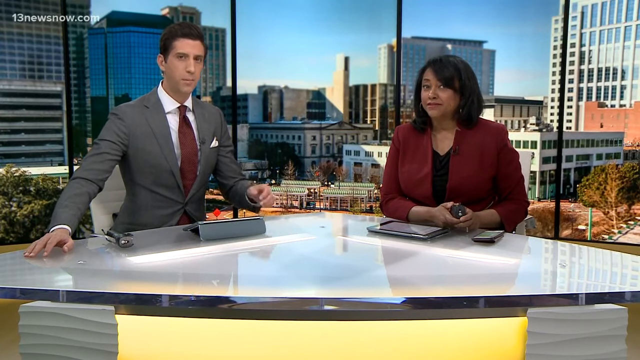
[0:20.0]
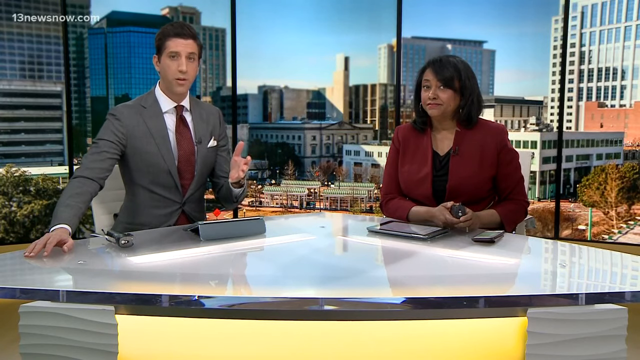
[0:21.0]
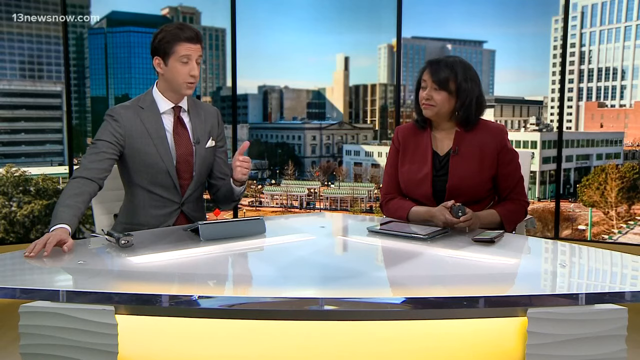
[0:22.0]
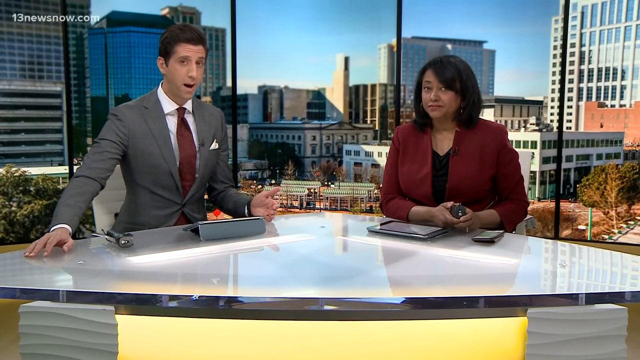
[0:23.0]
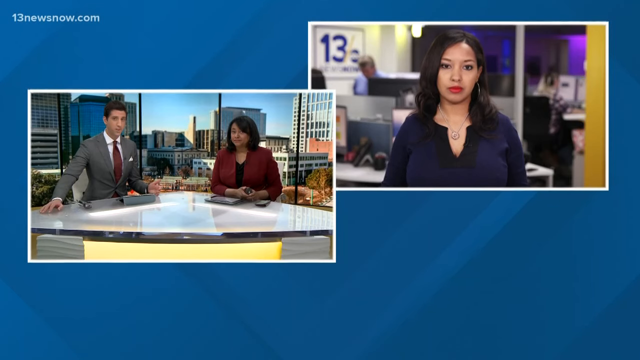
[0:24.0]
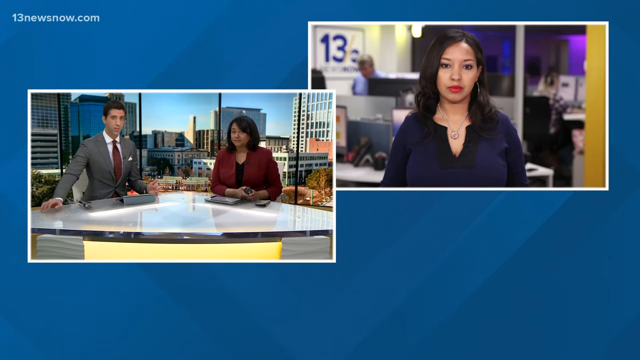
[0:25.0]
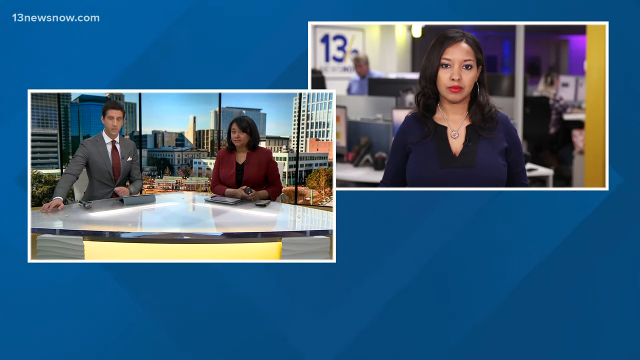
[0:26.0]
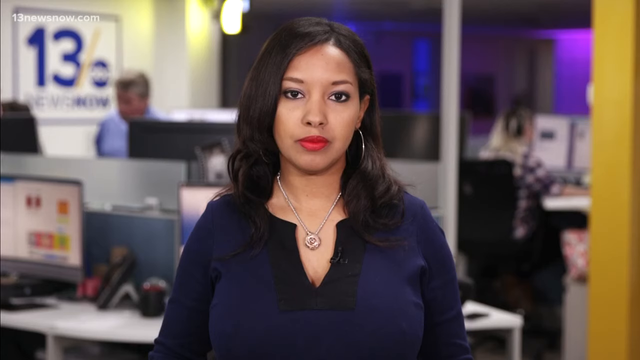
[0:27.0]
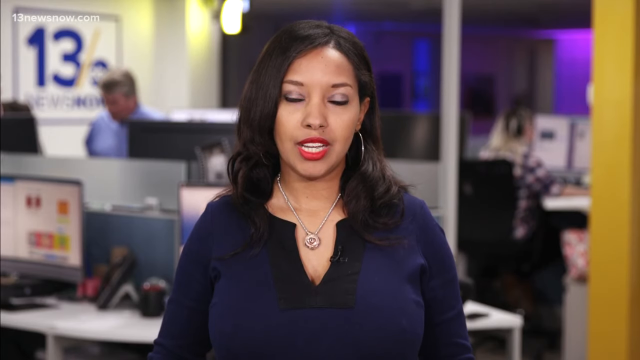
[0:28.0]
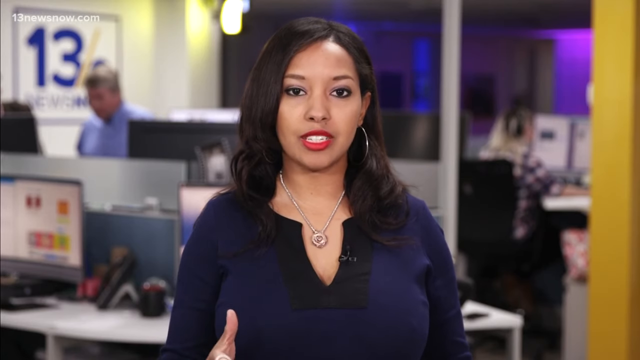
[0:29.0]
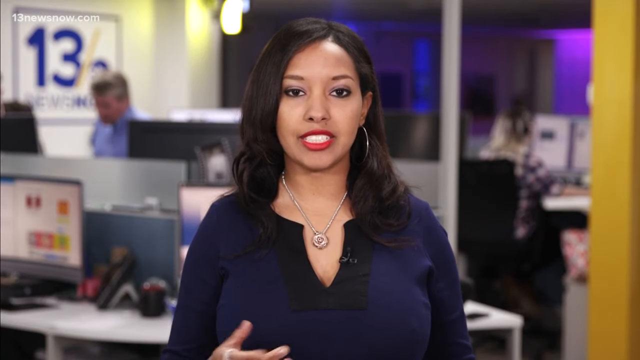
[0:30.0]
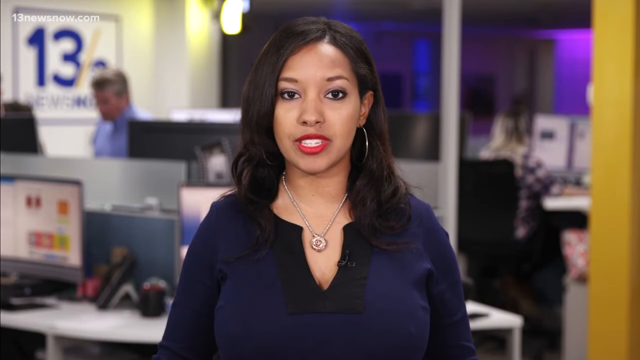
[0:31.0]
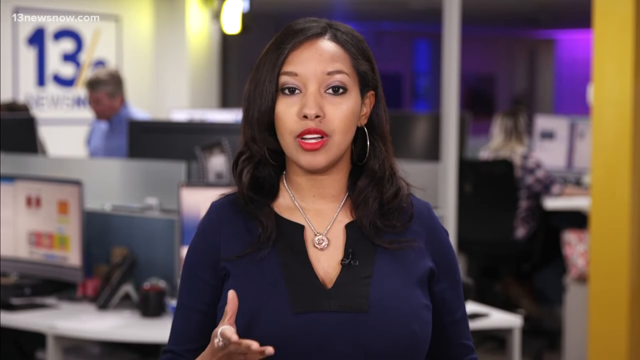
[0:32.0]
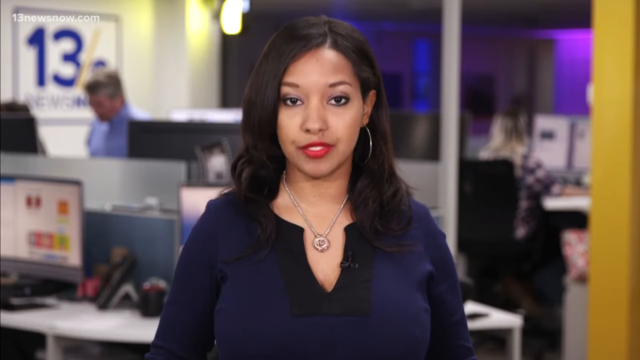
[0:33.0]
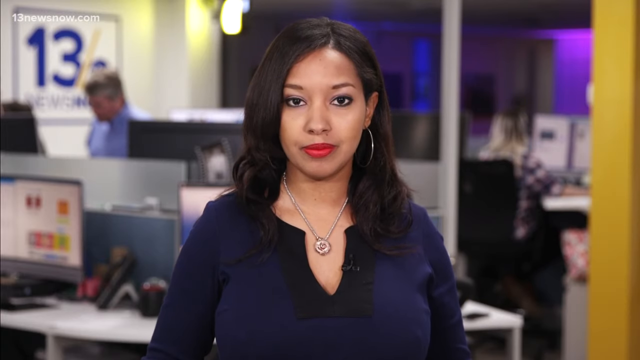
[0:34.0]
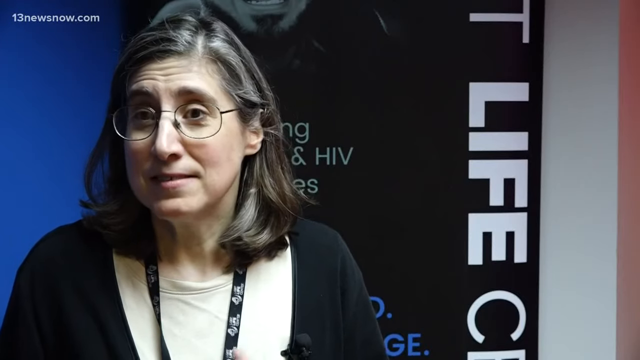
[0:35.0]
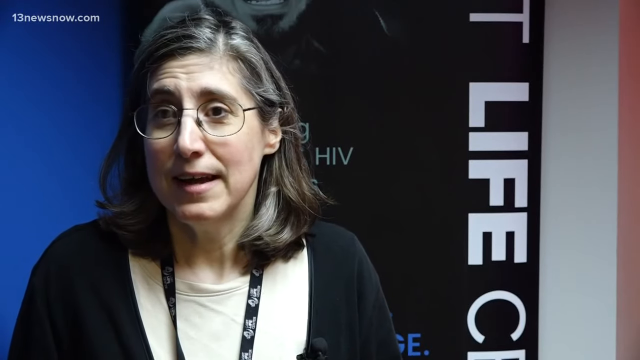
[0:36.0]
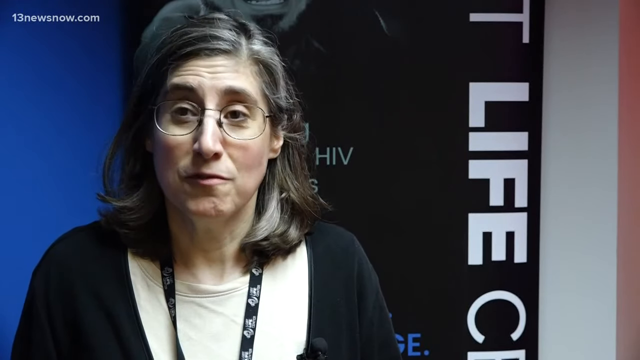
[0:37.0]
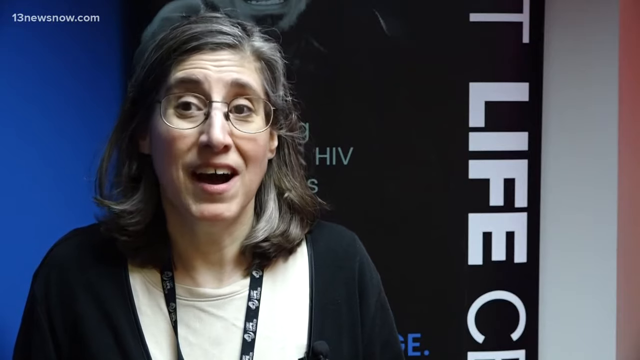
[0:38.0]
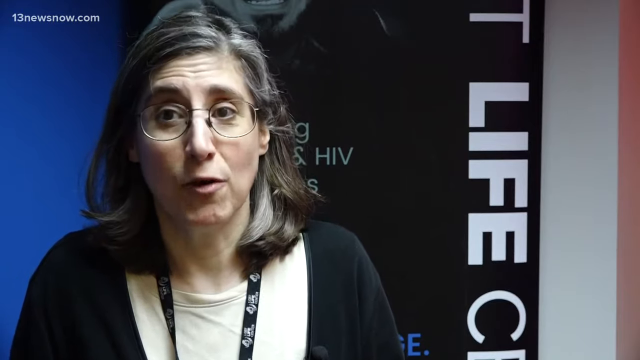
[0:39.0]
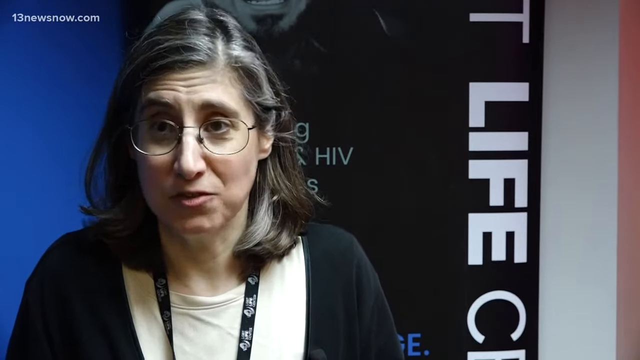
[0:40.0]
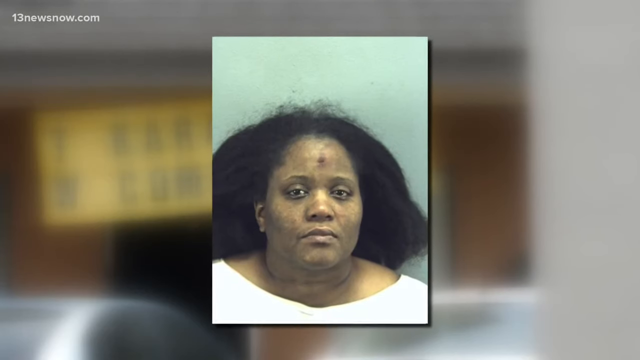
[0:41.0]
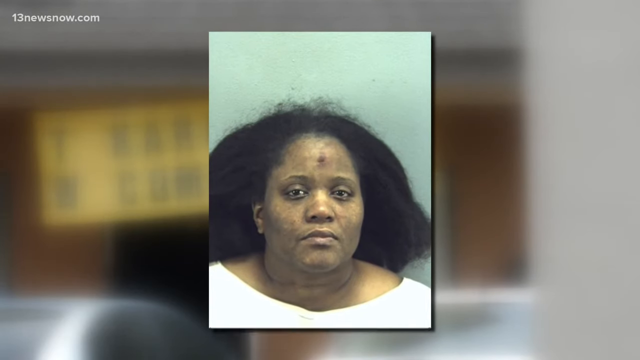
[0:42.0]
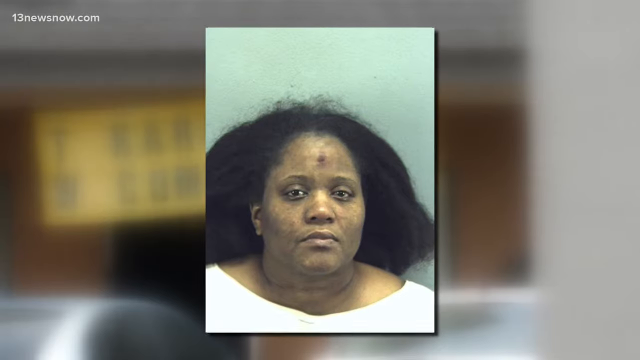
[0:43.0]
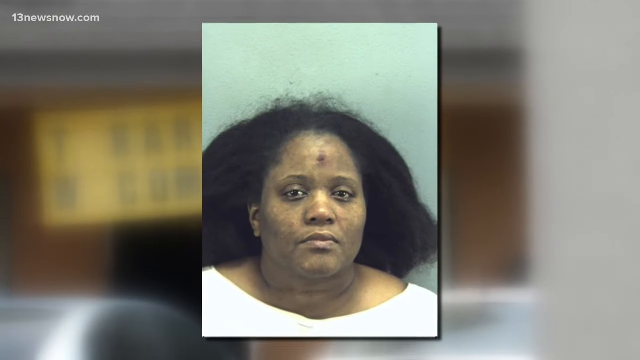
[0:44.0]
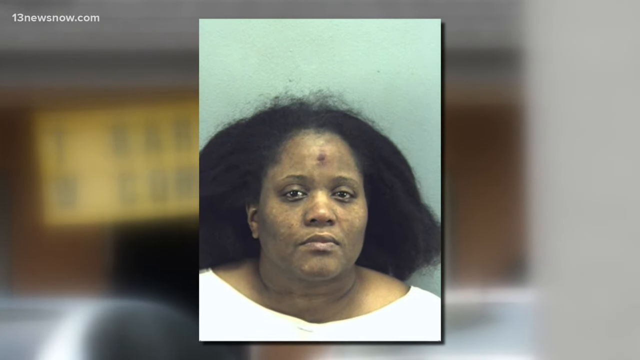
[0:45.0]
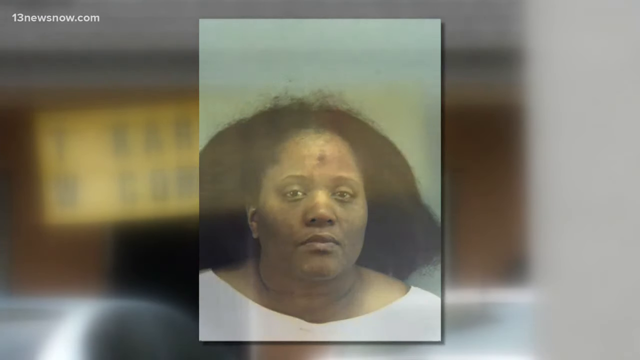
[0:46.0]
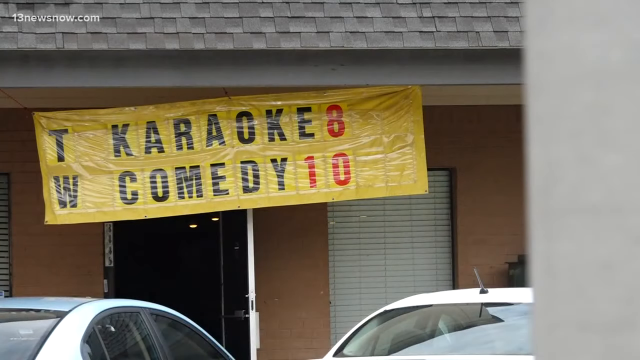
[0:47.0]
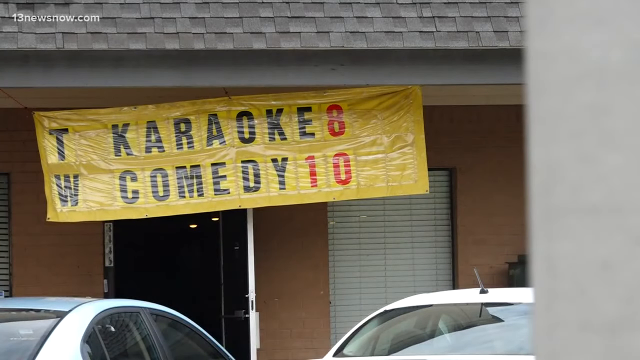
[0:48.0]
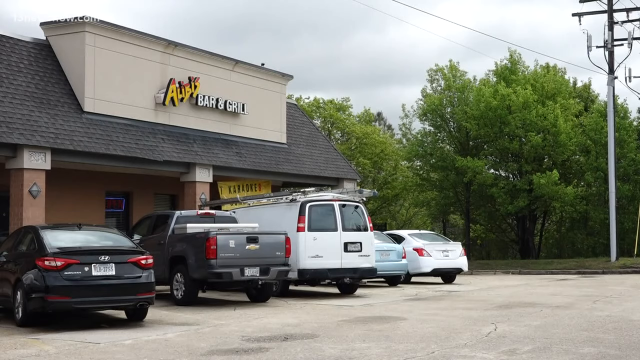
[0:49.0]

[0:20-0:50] The reporter on the left is tall and lean and wears a gray suit. The woman on the right has short hair and wears a sort of maroon jacket and a black shirt, and she appears to be holding a cell phone in her hand. Behind them in the studio are windows overlooking a city skyline. The video then cuts to a segment with a blue background and two insets; the second inset shows another reporter wearing a blue shirt with a little V cut at the top, and they are talking to her about the story. The screen then changes to a full-screen view of her as she introduces the next story. A somewhat older woman with some gray hair and glasses is standing in front of a tall sign on which the words "HIV" and "life" are visible, with "life" written rotated 180 degrees to the right. She wears a cardigan. She talks to the interviewer rather than looking at the camera, and she appears to be in a hallway or lobby area.